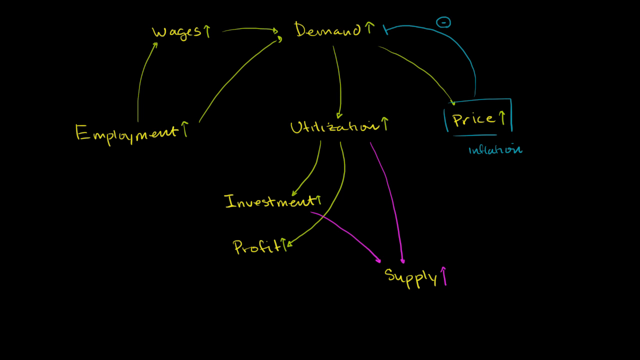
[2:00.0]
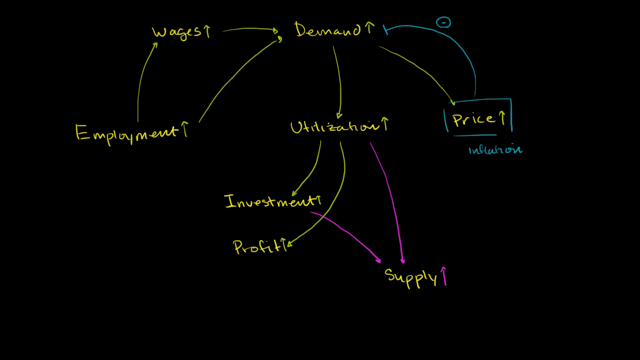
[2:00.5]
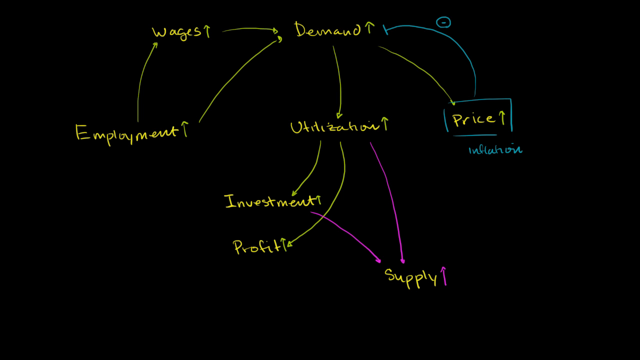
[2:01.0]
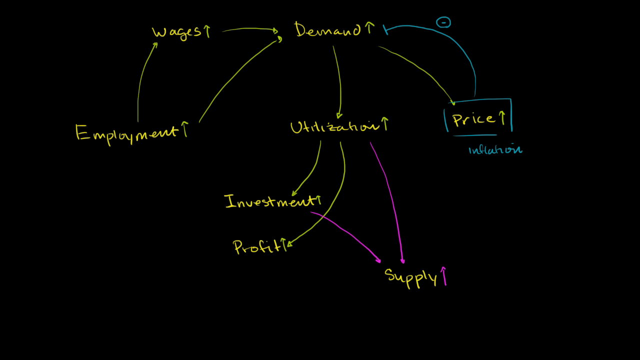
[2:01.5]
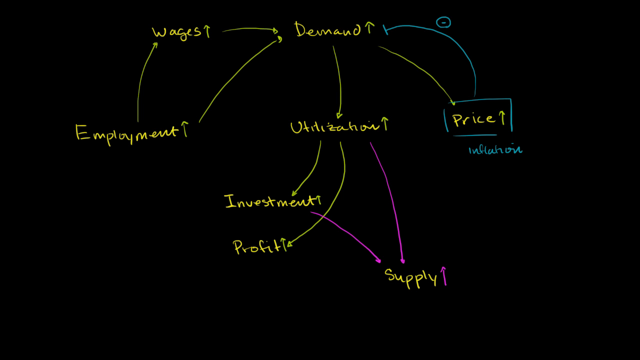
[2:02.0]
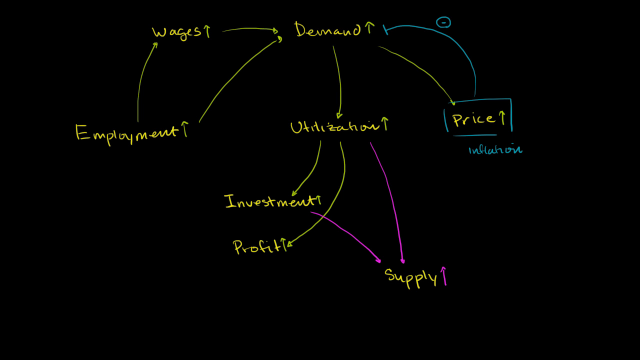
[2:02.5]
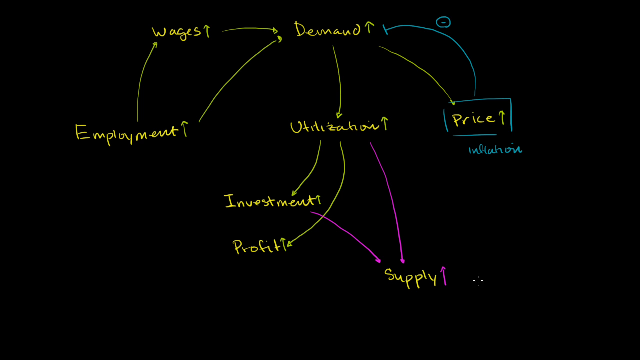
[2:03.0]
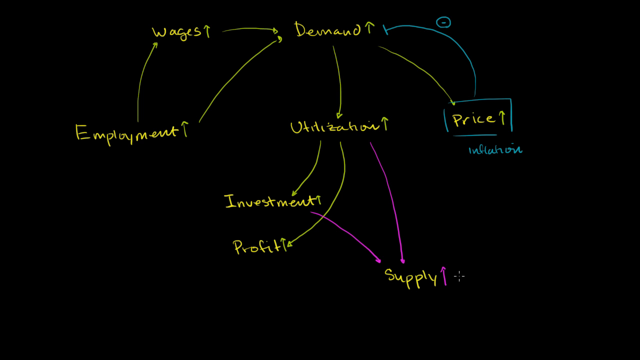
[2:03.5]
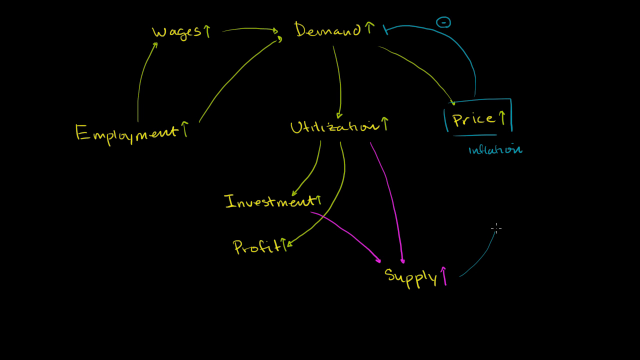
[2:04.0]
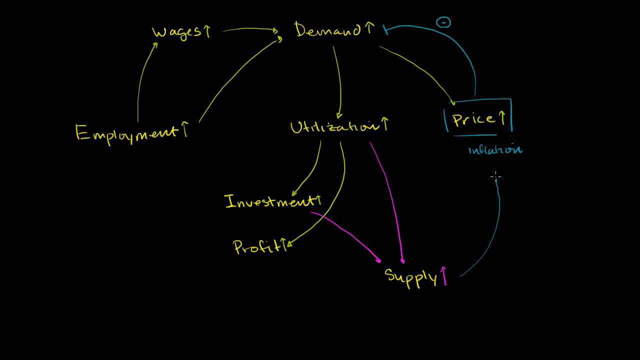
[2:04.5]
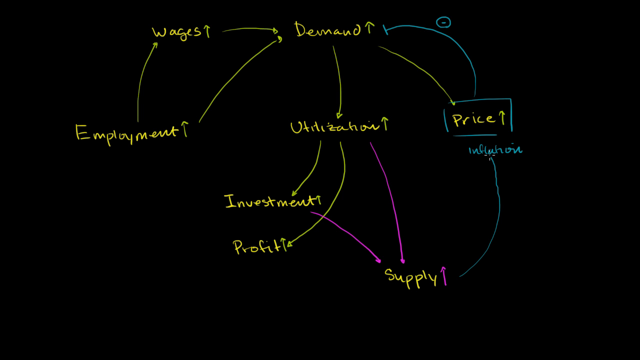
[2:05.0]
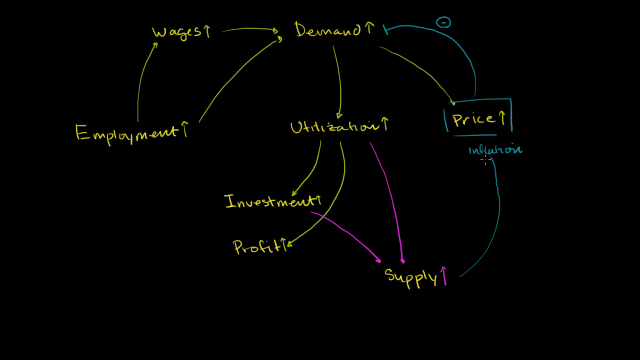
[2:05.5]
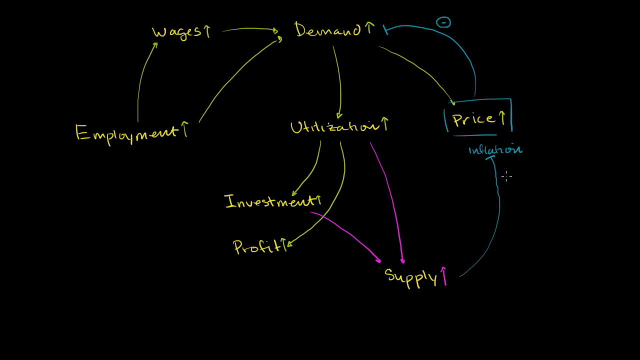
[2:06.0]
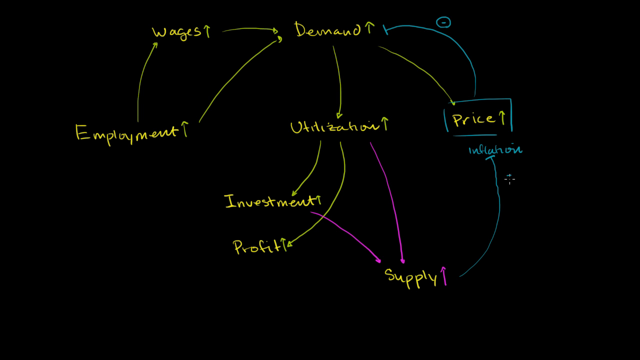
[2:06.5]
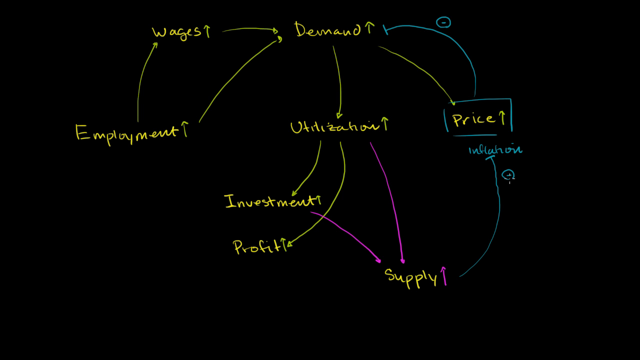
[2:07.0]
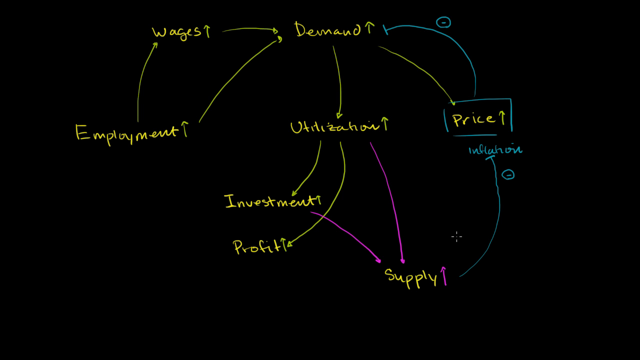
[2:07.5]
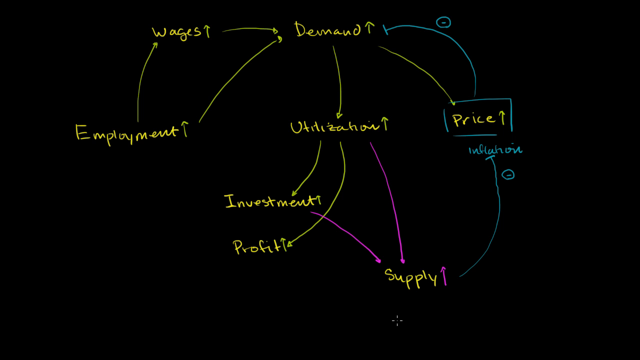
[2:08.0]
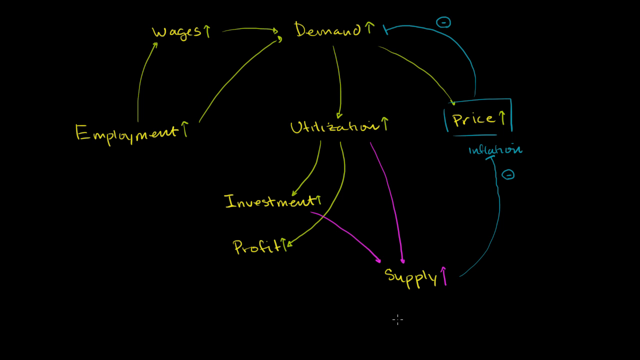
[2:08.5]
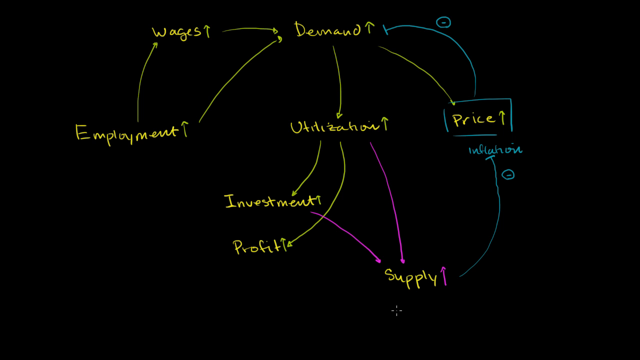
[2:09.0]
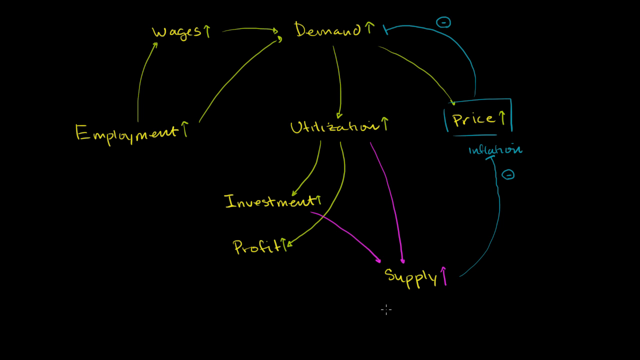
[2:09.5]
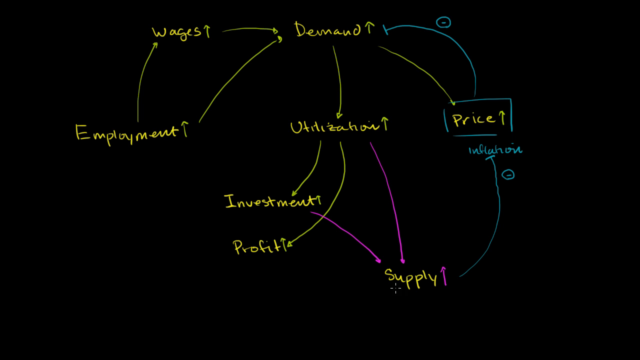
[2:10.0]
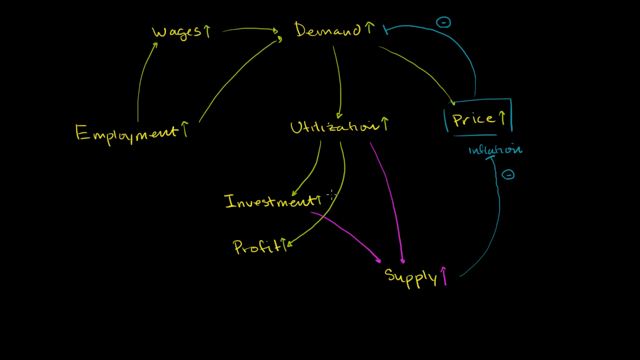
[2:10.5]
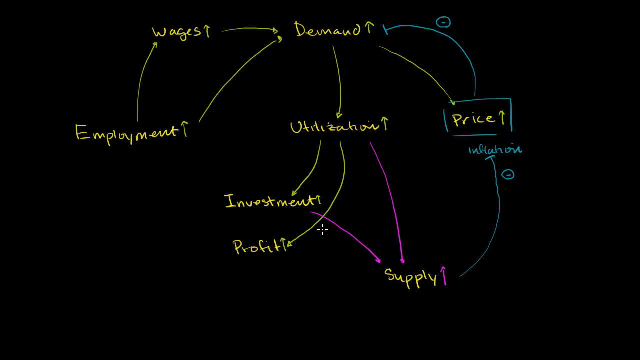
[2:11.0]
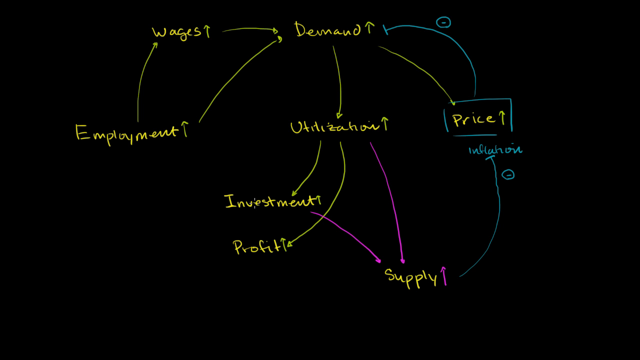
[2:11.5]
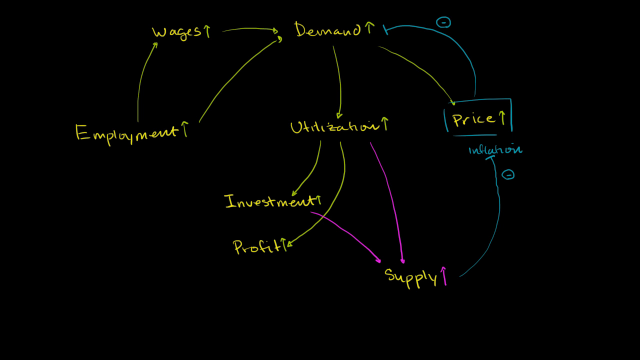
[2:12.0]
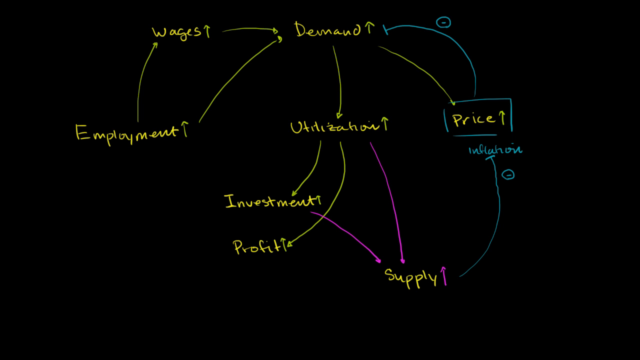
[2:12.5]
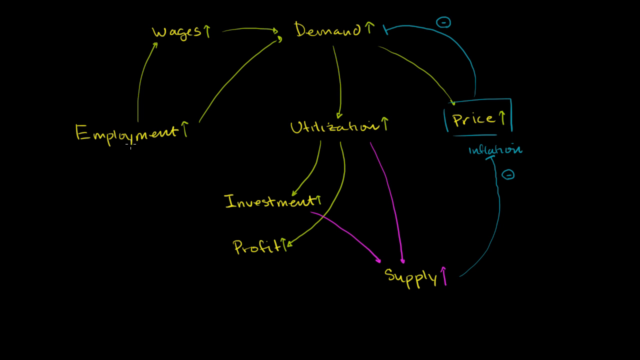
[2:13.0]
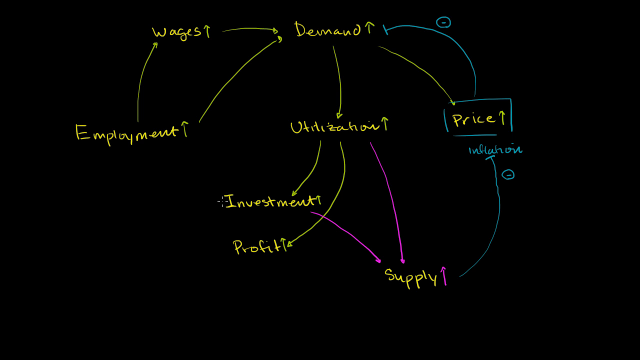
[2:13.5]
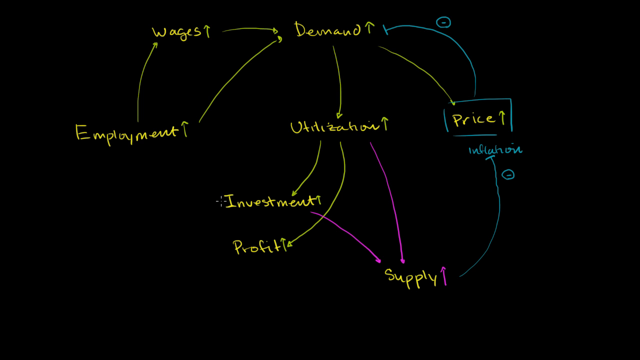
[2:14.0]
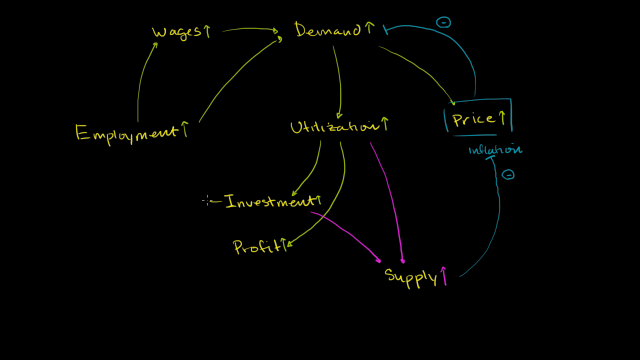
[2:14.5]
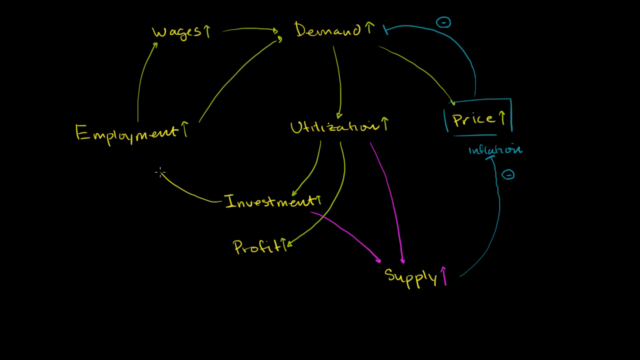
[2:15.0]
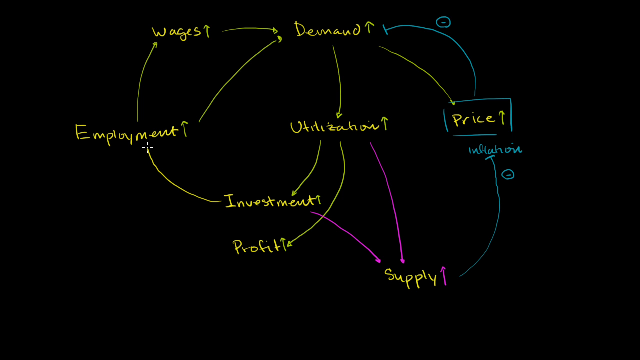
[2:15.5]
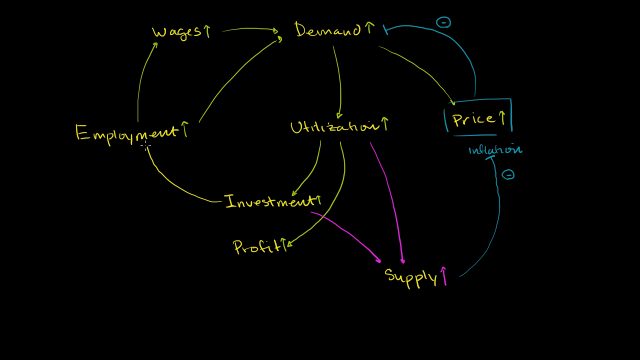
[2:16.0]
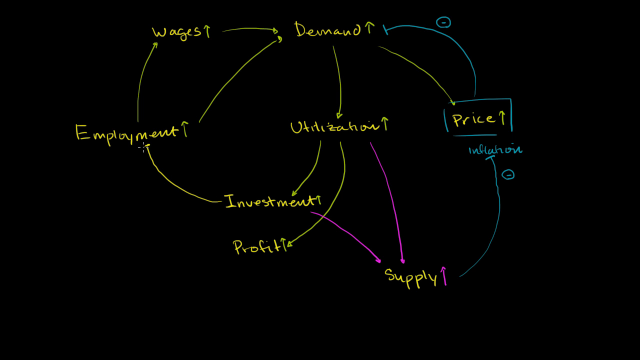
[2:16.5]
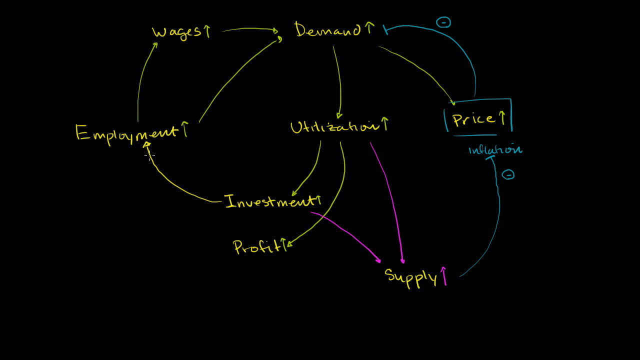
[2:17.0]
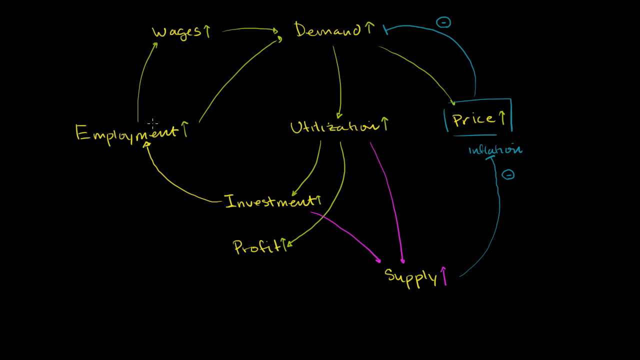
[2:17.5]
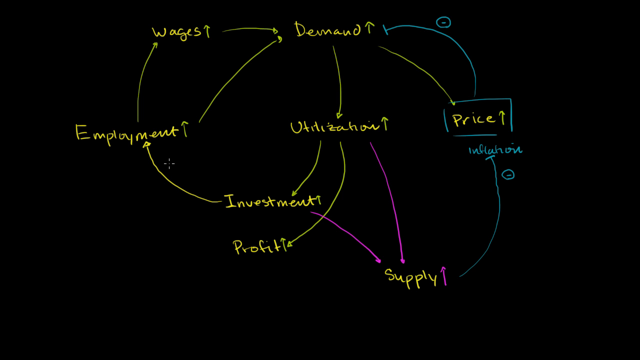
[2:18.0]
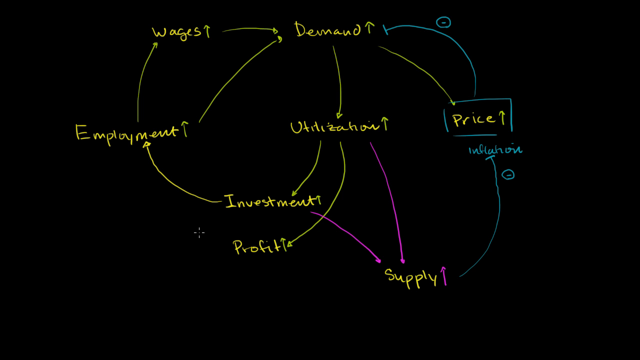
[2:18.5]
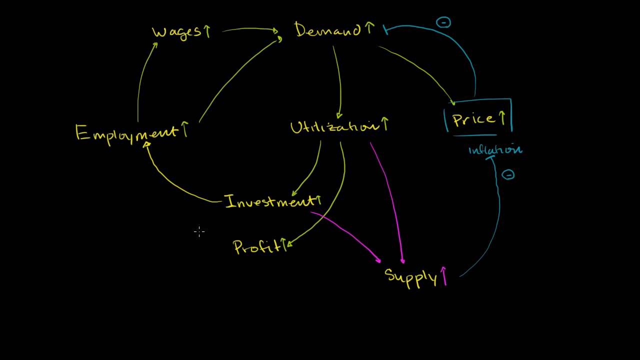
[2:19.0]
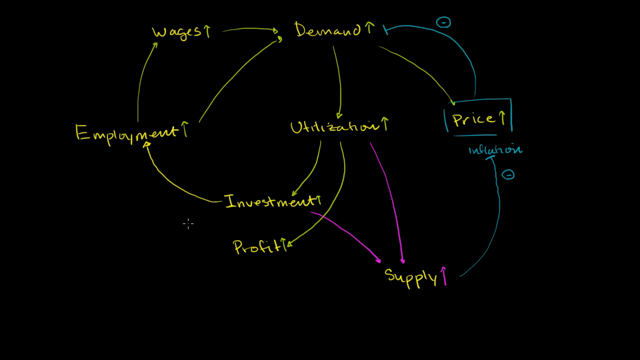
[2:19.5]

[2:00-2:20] On the black screen, "Wages" and "Demand" are at the top in yellow, "Employment," "Utilization" and "Price" are in the middle, with "Investment" below "Utilization," "Profit" below "Investment," and "Supply" below "Profit" off to the right. Arrows point from "Employment" up to "Wages" and "Demand," from "Wages" to "Demand," and from "Demand" down to "Utilization" and "Price." Two arrows branch down from "Utilization" to "Investment" and "Profit." Purple arrows point from "Utilization" and from "Investment" down to "Supply," and a small purple arrow symbol is next to "Supply." "Price" has a blue box around it, "Inflation" is written in blue directly below it, and a line leads from the top of the box up to "Demand" with a circled negative symbol. Then a blue line is drawn from "Supply" up to the word "Inflation" with another circled negative, and a yellow arrow is drawn from "Investment" up to "Employment."